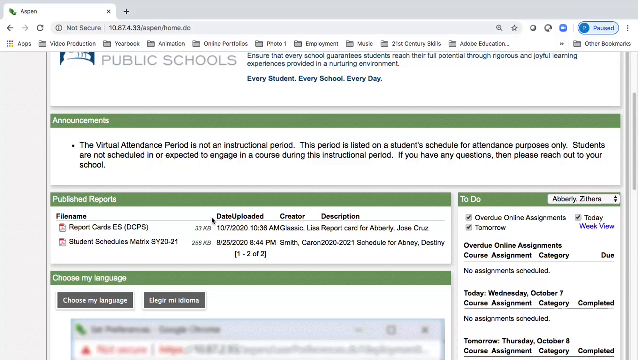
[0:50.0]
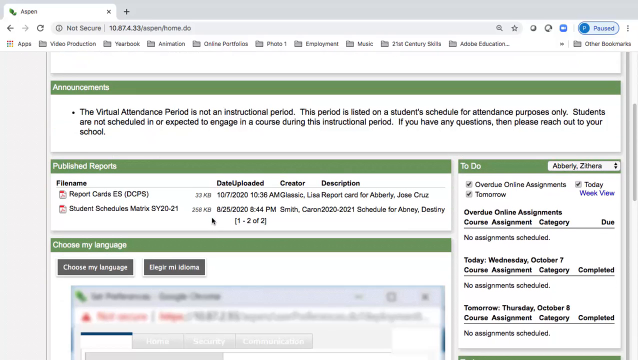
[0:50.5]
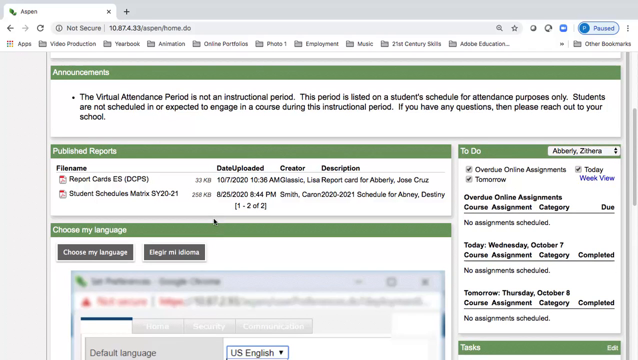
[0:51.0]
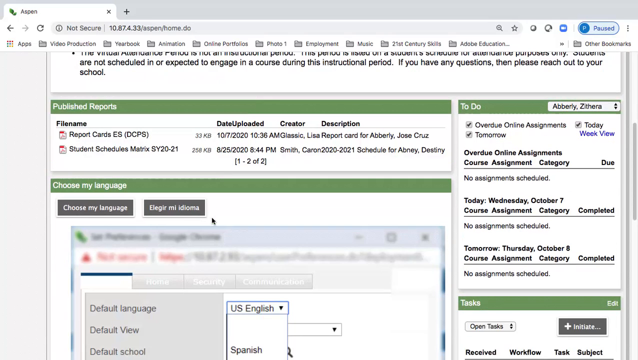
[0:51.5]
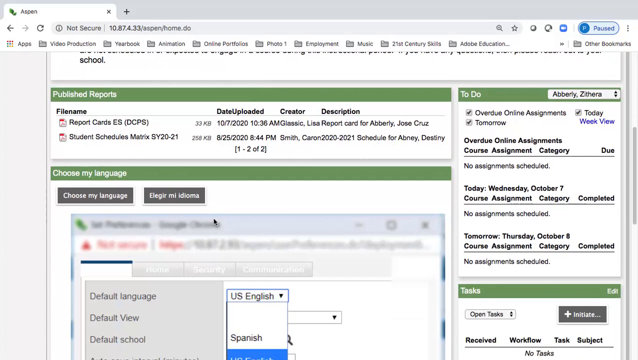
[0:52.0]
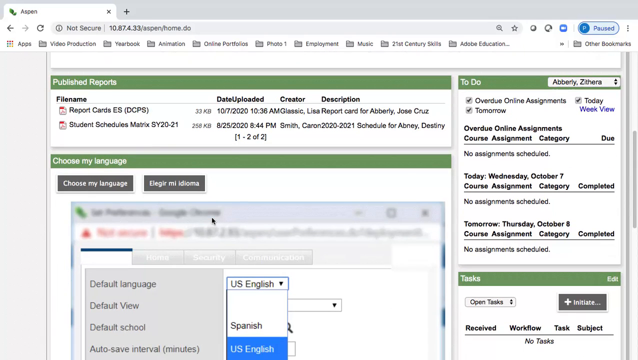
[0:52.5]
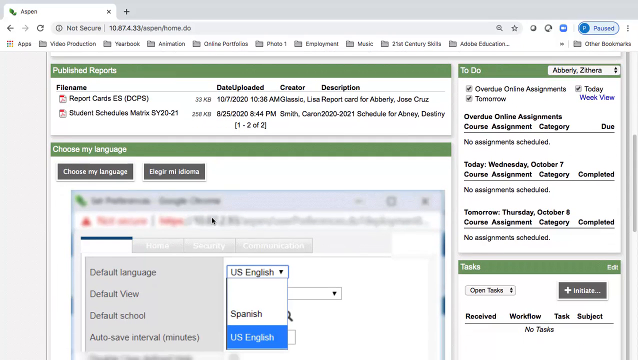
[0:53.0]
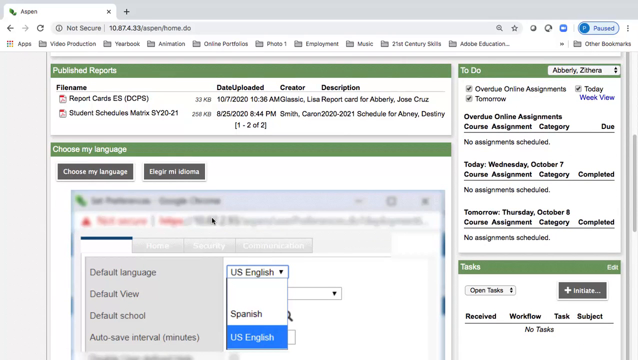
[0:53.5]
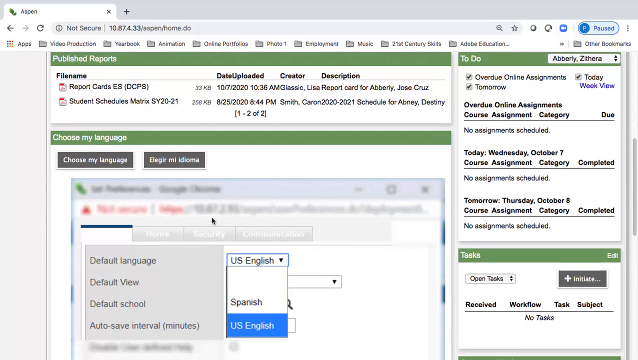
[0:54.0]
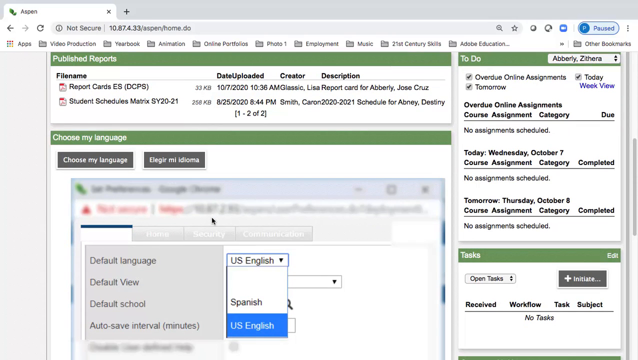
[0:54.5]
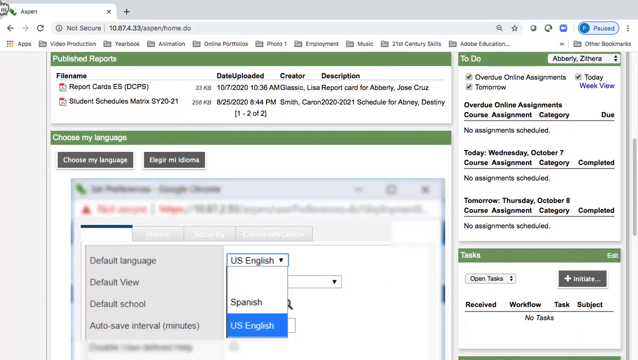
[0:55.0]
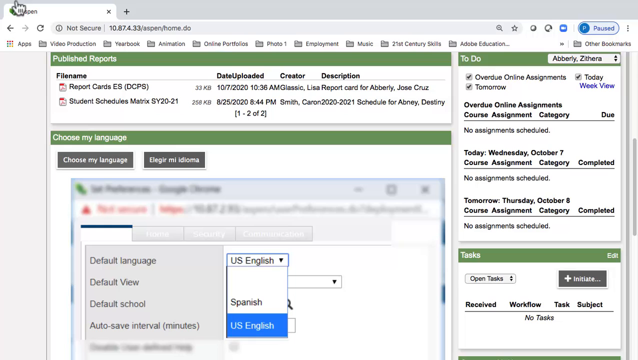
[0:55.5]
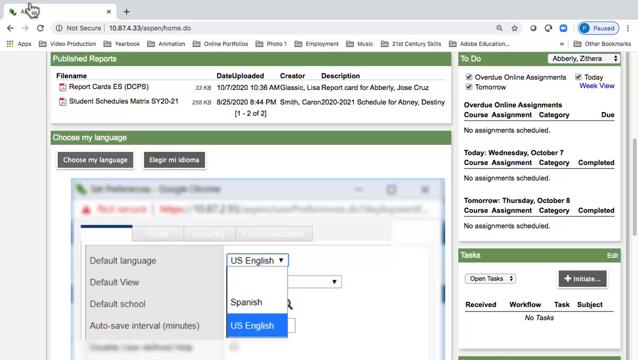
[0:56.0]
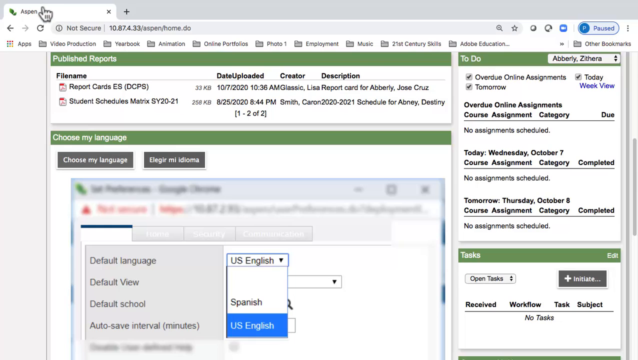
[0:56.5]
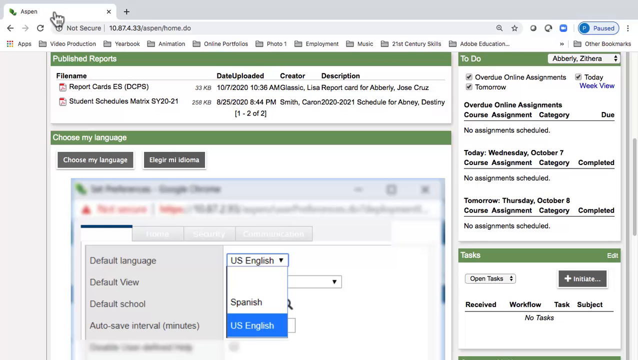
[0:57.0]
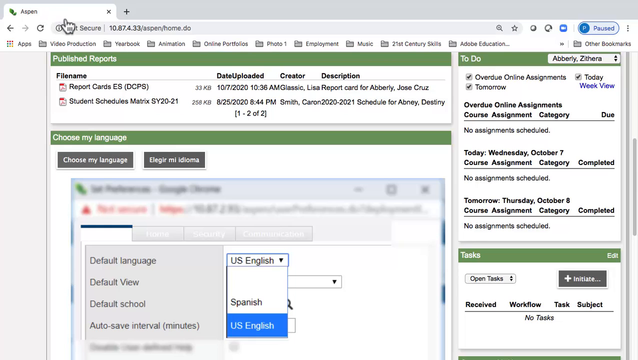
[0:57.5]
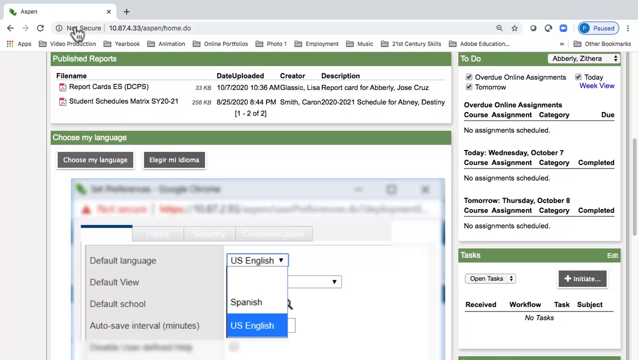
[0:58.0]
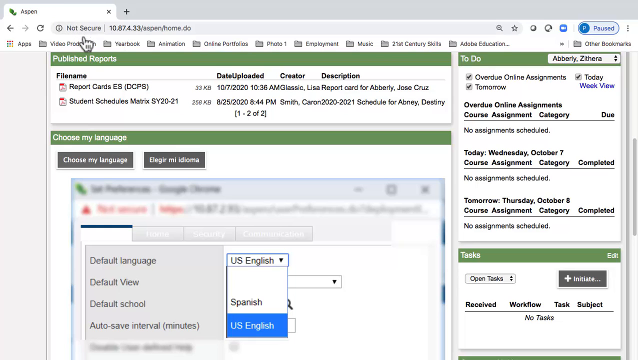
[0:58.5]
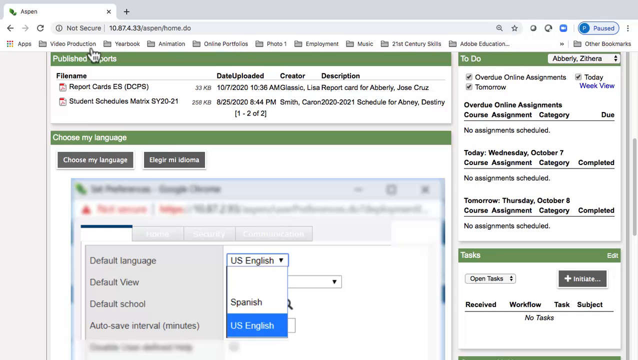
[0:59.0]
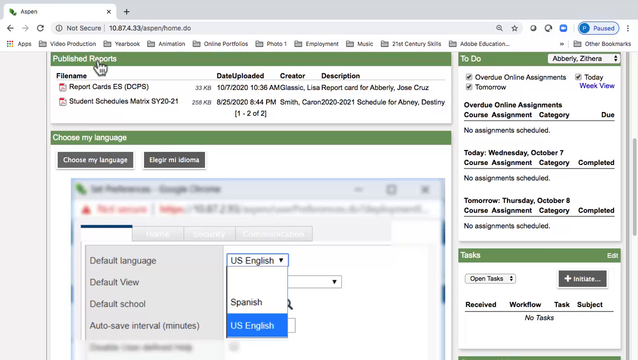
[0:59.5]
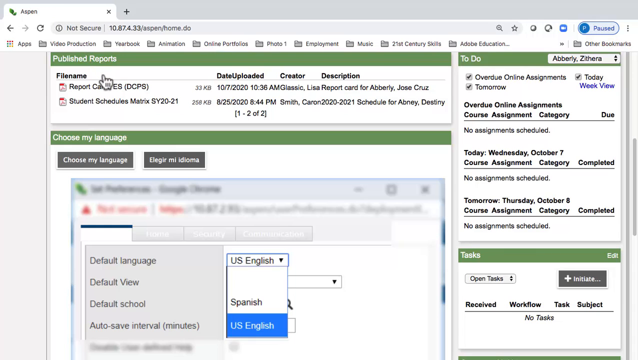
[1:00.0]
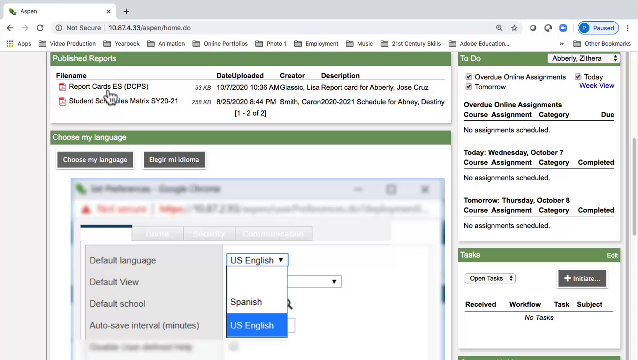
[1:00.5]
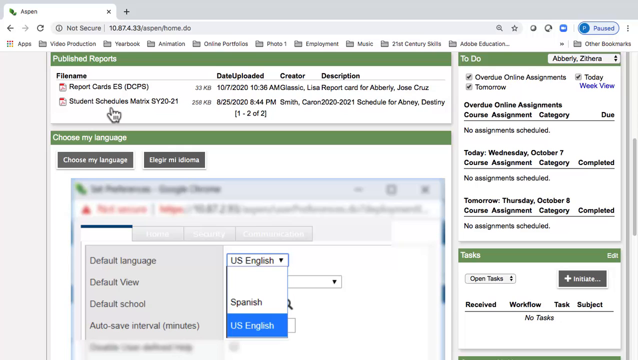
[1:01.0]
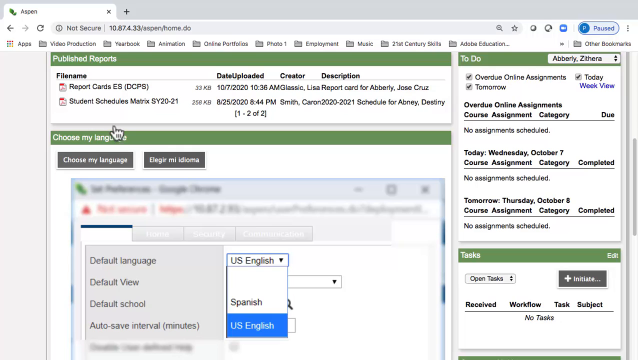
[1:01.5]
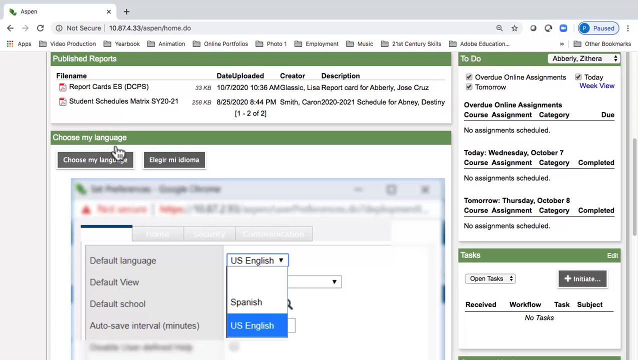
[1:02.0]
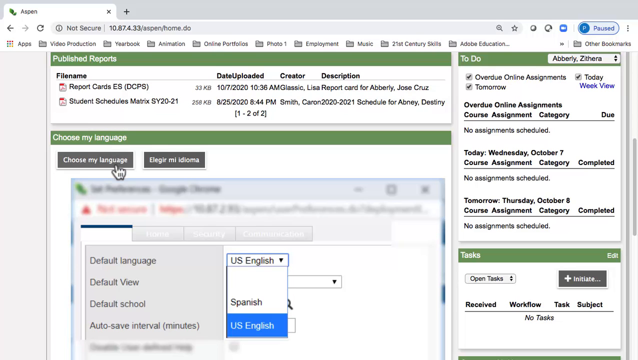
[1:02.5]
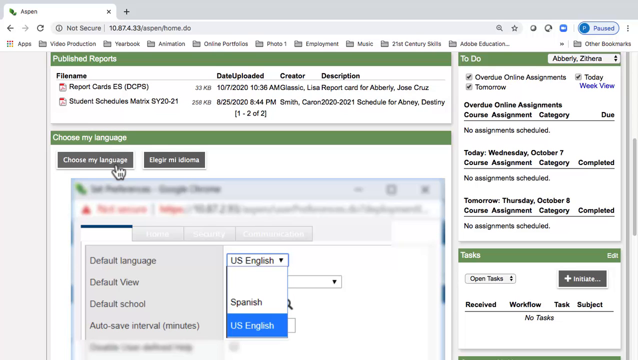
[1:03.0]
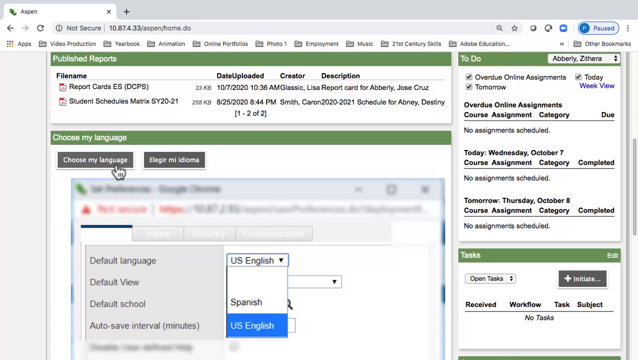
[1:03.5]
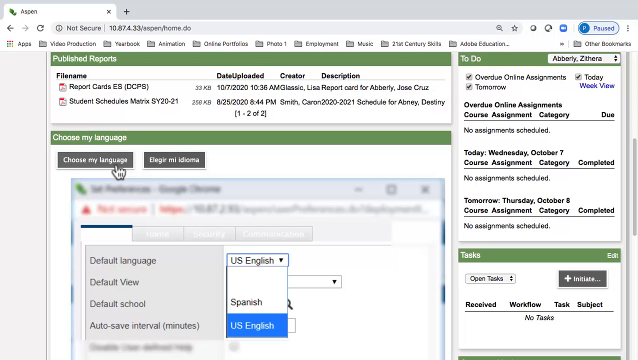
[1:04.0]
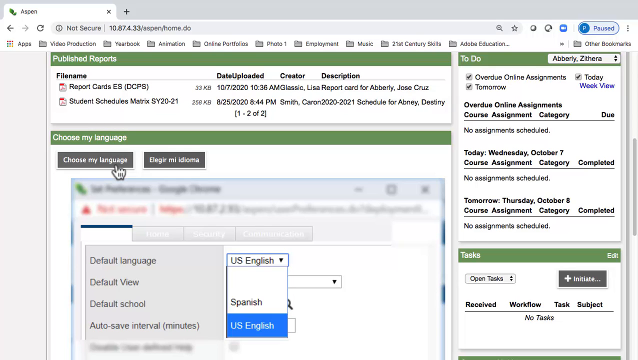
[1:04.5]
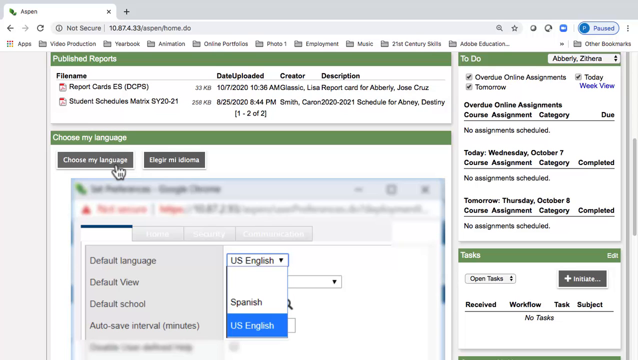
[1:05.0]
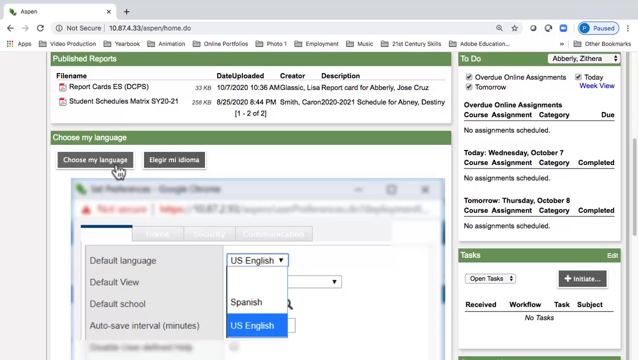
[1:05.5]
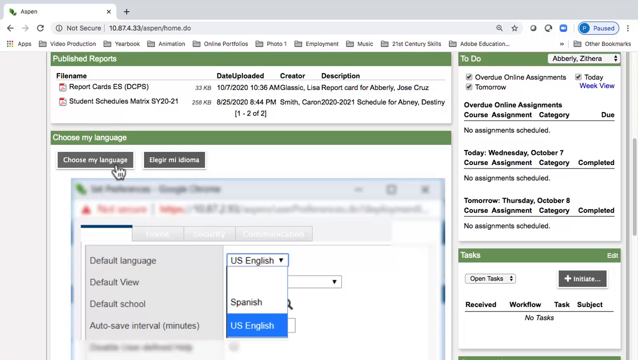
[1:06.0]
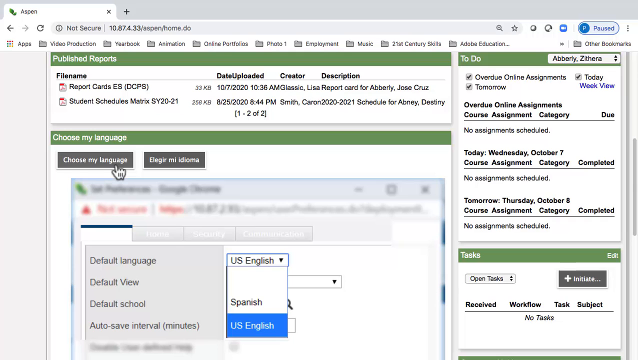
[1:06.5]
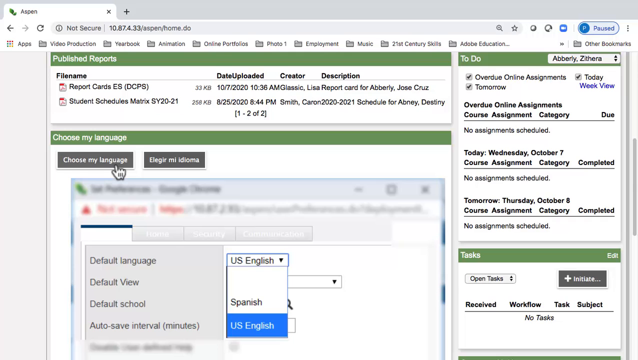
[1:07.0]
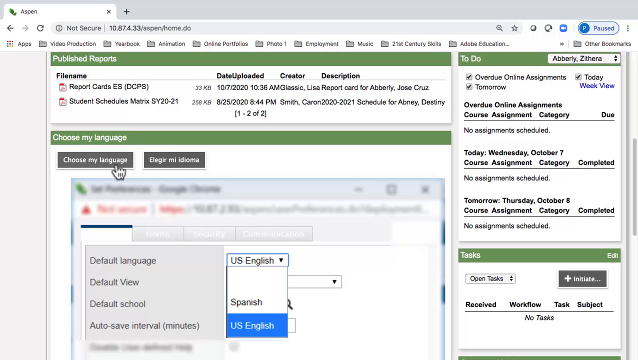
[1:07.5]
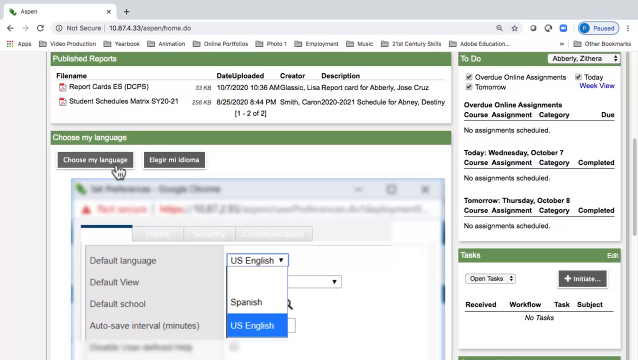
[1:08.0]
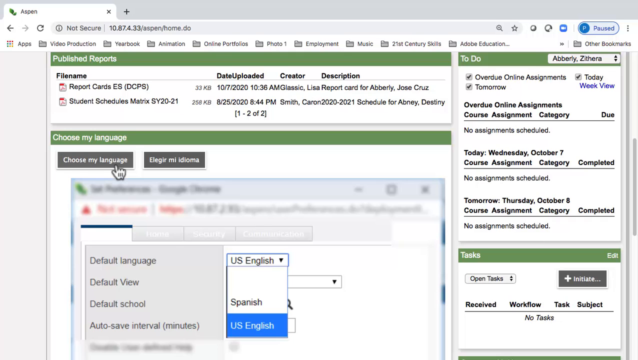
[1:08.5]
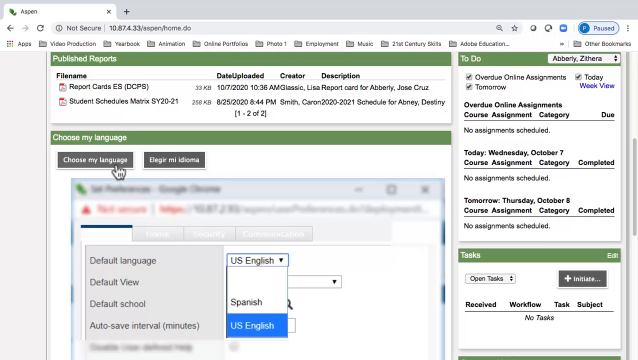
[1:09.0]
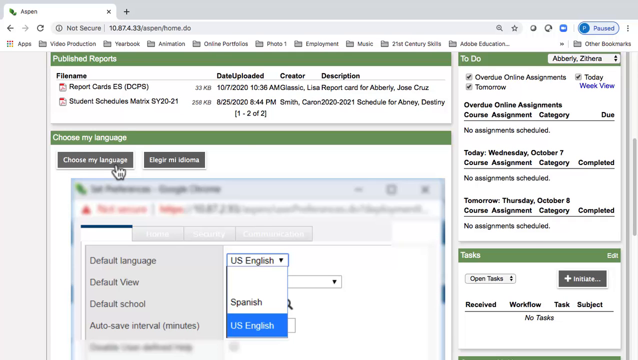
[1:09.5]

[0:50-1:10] The Aspen DCPS homepage begins scrolling down. Below the Announcements section is a Published Reports section with columns for file name, date uploaded, creator, and description. There are only two files: "Report Cards ES" and a Student Schedule Matrix for school year 20 through 21, each with dates, creators, and a brief description. On the right is a to-do list for Avril Zethra with Overdue Online Assignments, Today, and Tomorrow, each with small checkboxes. The Overdue Online Assignments area has course, assignment, and category headings and reads "No Assignments Scheduled." The page slowly scrolls down to a section below Published Reports titled "Choose My Language," with options for different languages. The mouse then moves up to the Aspen tab, lingers there, and slowly comes back down toward the middle of the page, lingering on the Choose My Language button without clicking.